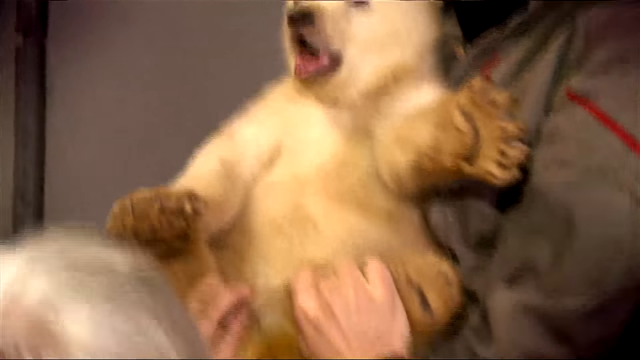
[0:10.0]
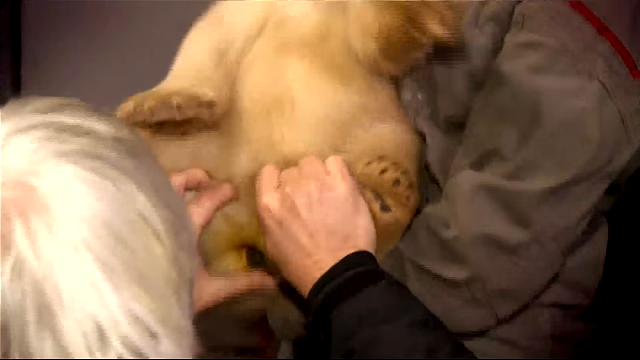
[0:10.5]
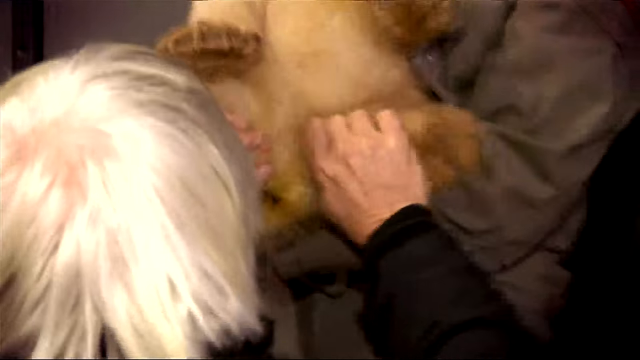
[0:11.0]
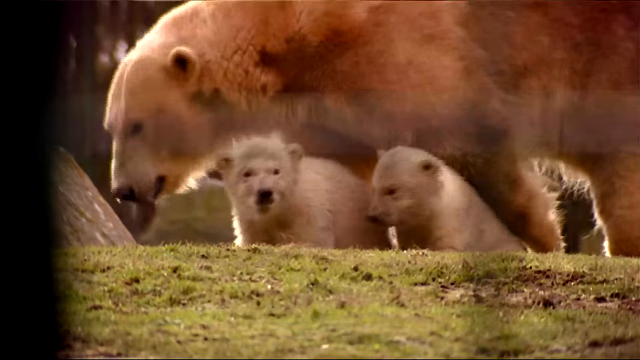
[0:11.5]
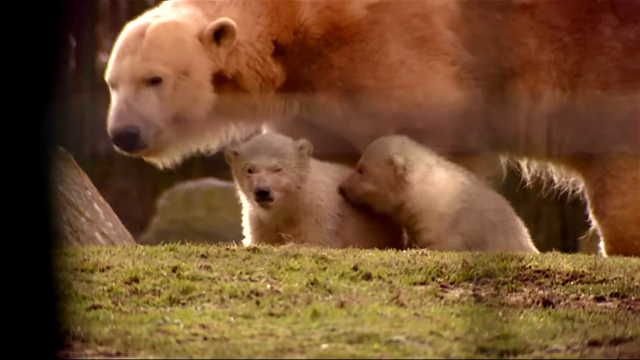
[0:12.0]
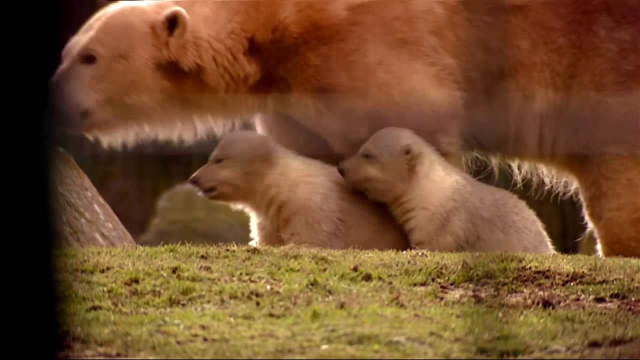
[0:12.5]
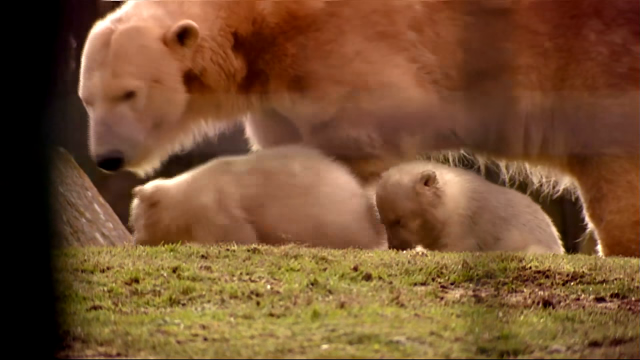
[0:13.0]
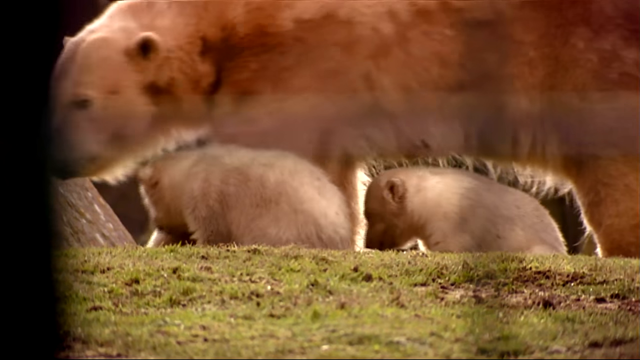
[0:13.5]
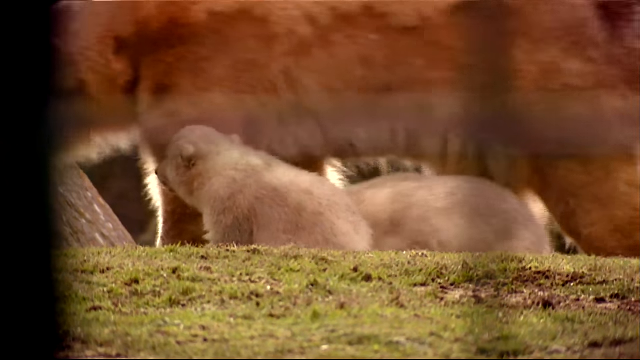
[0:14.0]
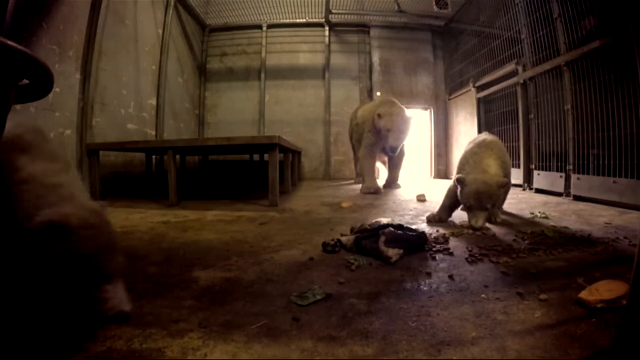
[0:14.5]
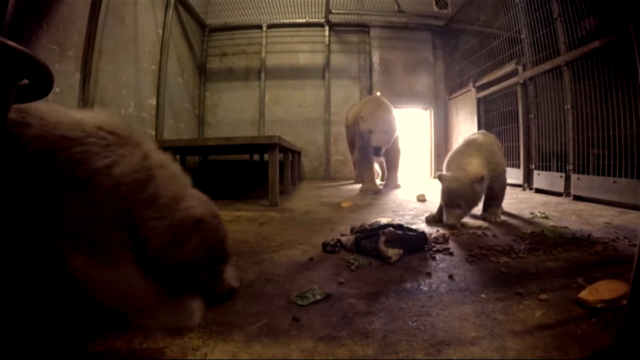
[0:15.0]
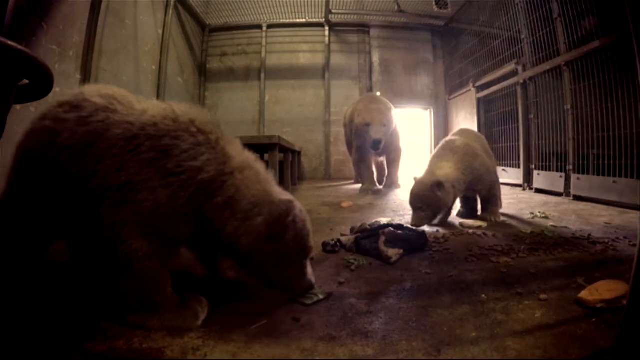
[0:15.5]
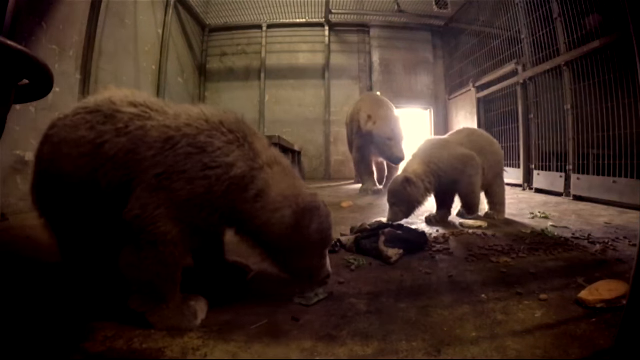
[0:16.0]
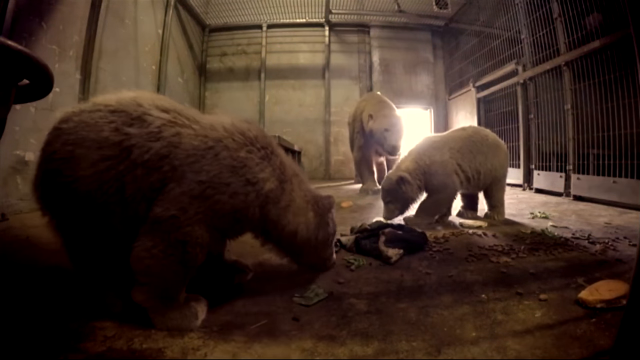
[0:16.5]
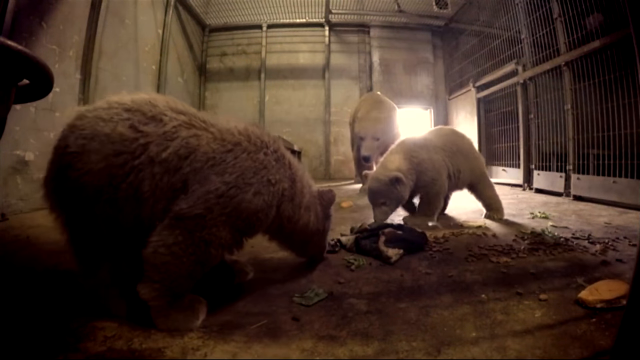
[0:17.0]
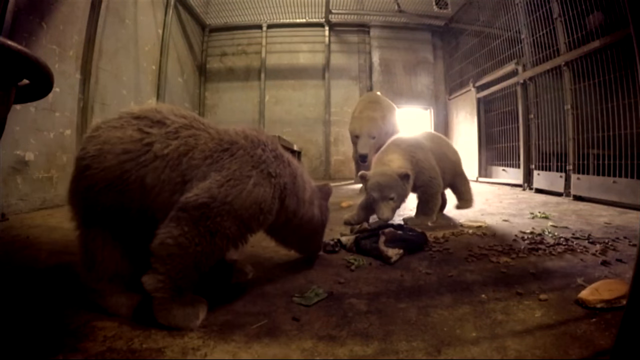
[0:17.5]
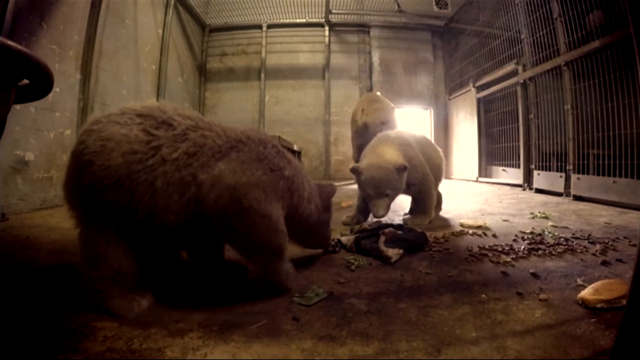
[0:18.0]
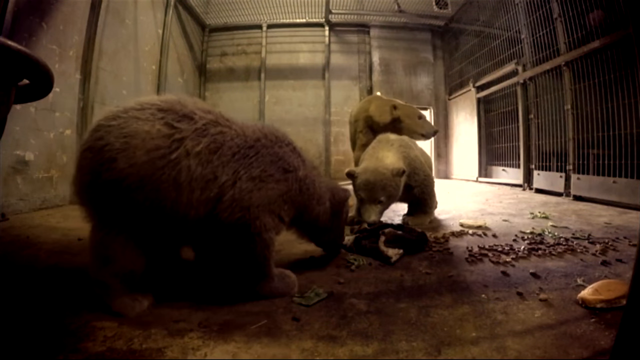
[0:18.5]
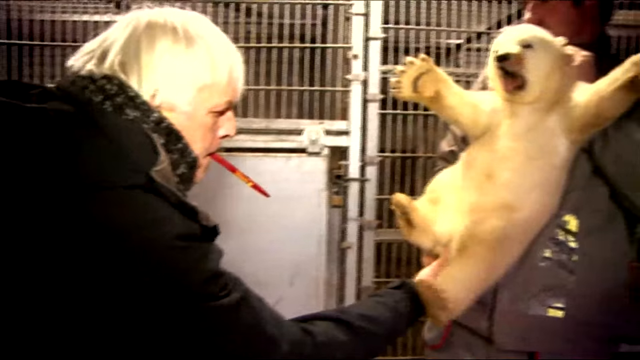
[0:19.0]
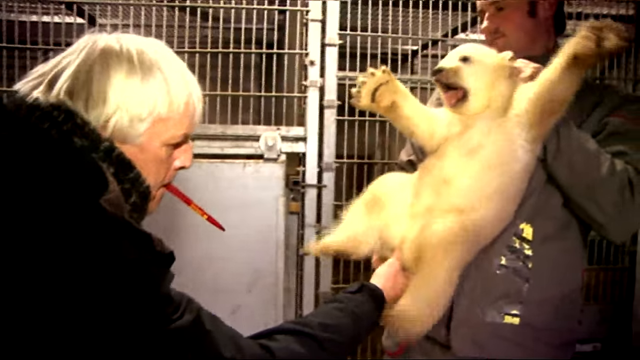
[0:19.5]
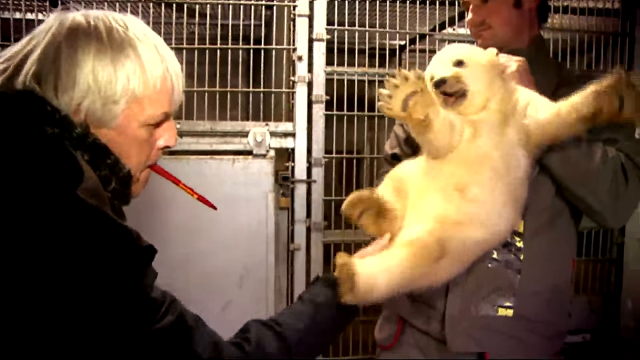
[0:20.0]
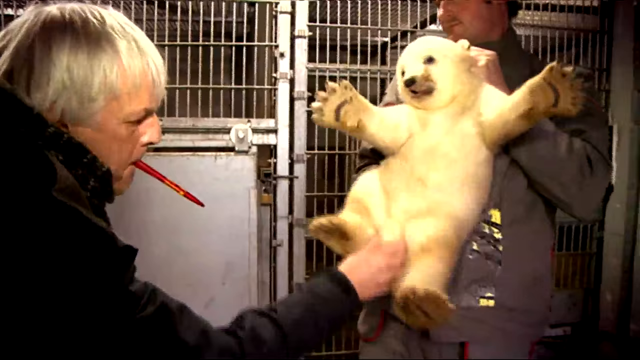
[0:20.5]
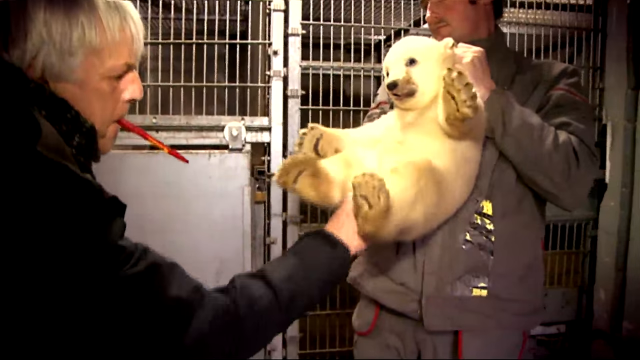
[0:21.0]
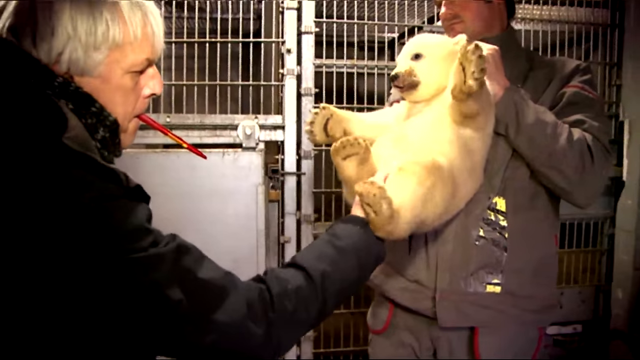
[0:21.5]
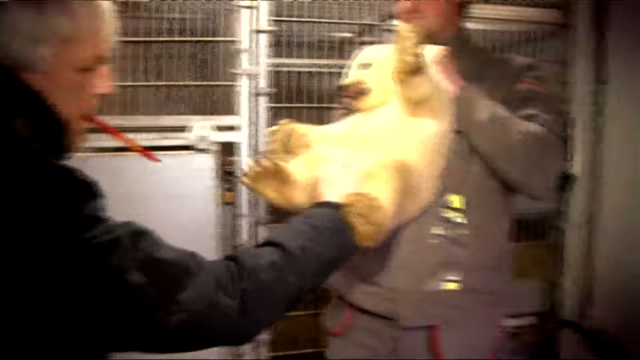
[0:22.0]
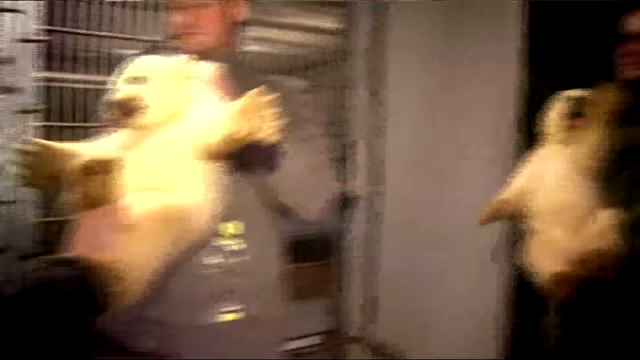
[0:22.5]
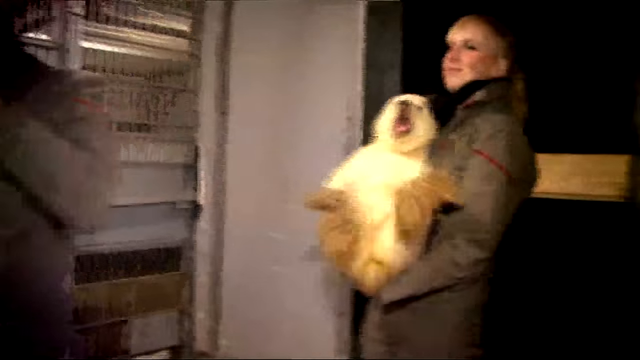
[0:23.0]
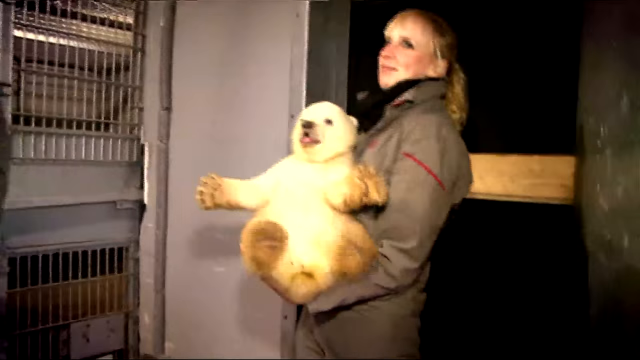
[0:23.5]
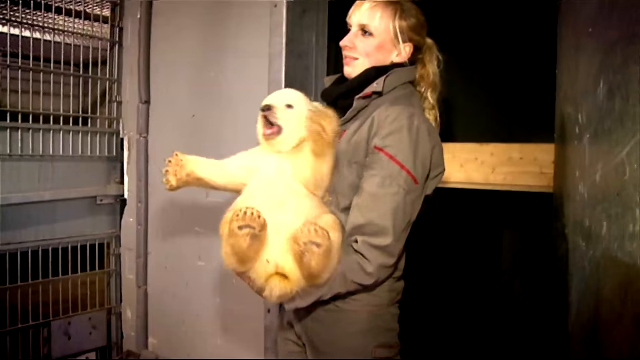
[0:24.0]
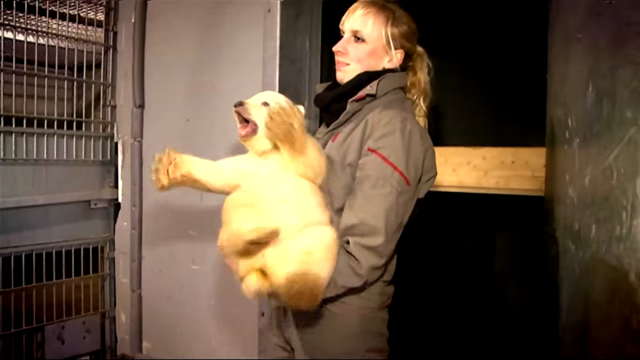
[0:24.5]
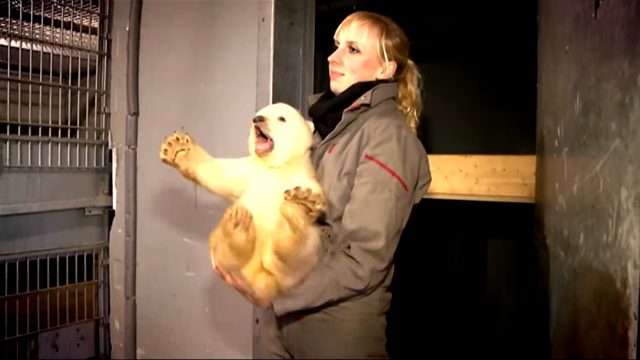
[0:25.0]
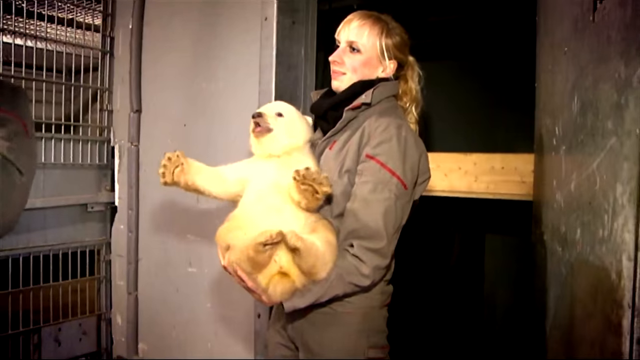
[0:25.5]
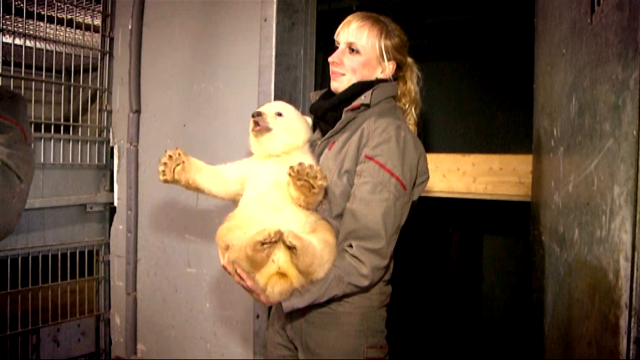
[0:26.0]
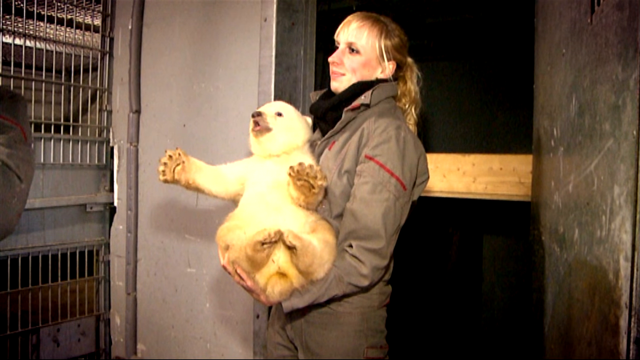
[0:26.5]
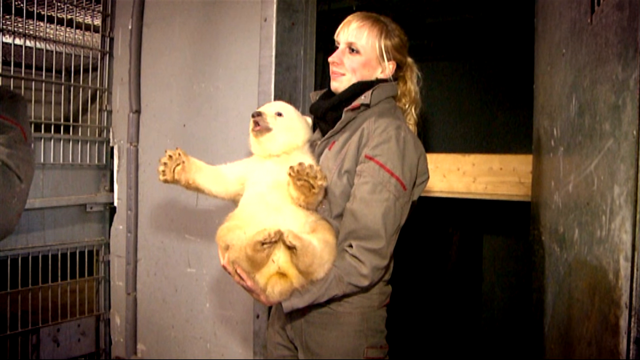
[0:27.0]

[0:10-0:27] One of the little polar bears, held in a woman's arms, looks like it is being inspected by a vet at its nether region. The mother polar bear is on screen with her two cubs just below her, and in front of them is something like a wooden log covered in green moss. The polar bears are all white. They are playing outside, and then they are inside a barn, still three polar bears. The barn is quite dark, with a door at the back on the right letting some light in. One of the baby polar bears sniffs something on the floor; of the other two, one is on the left at the front and the other, which looks like the older one, is behind. The video then moves to the man inspecting the baby polar bear. He has grey hair, a red pen coming out of his mouth and a black coat, and he is still inspecting the baby polar bear's nether regions. The other baby polar bear is held by a woman with long blonde hair who wears a grey coat and a black scarf.